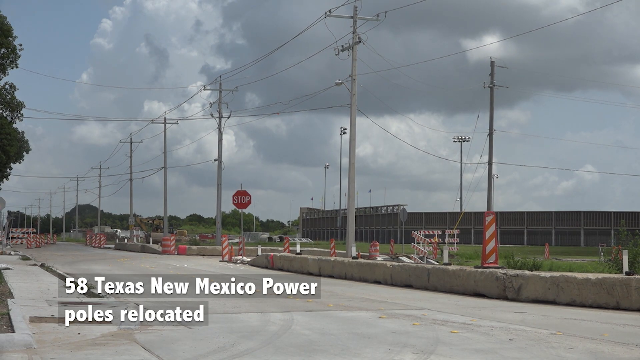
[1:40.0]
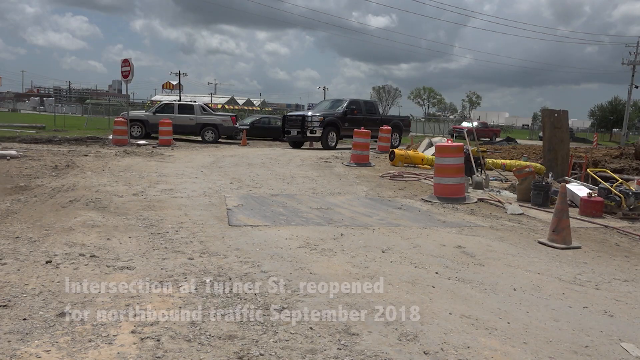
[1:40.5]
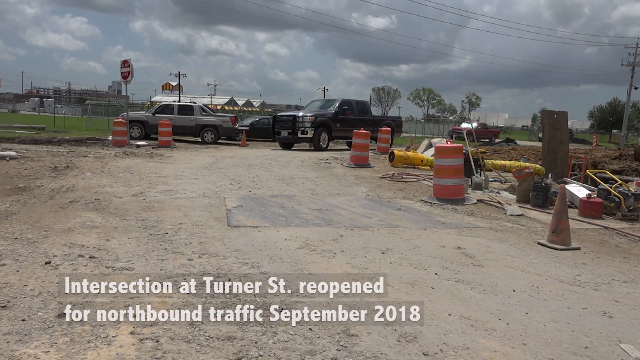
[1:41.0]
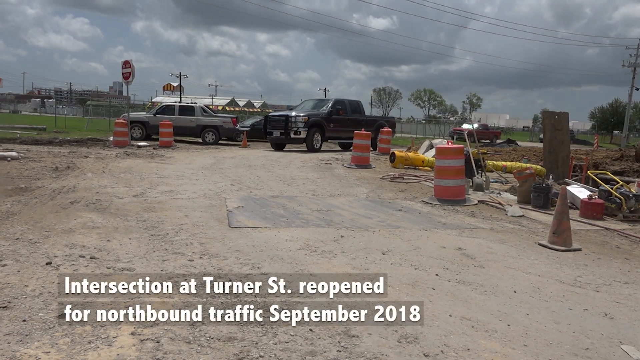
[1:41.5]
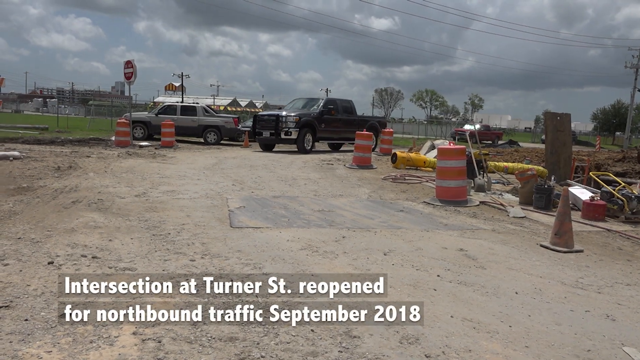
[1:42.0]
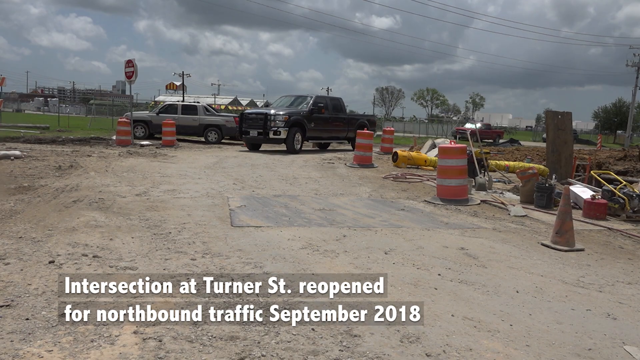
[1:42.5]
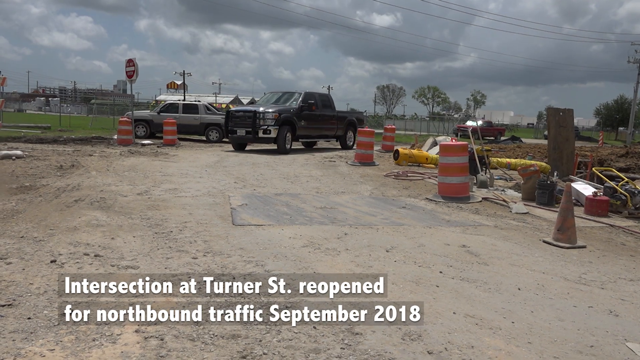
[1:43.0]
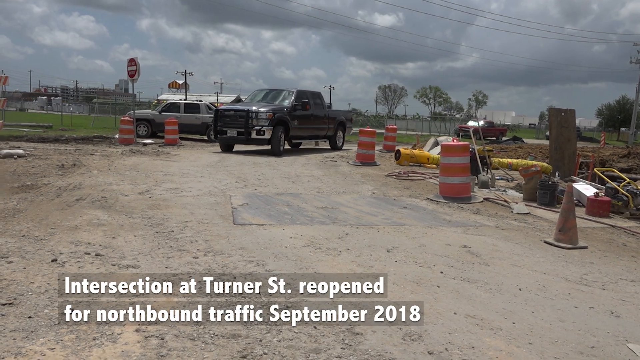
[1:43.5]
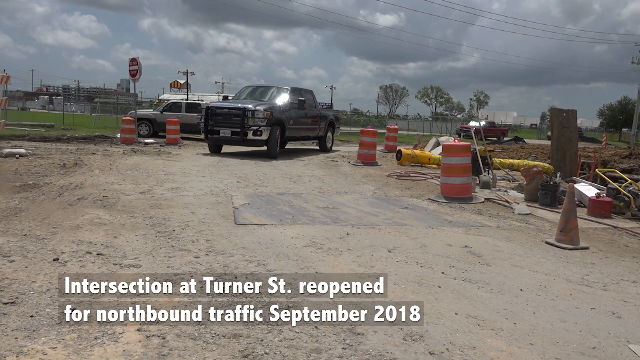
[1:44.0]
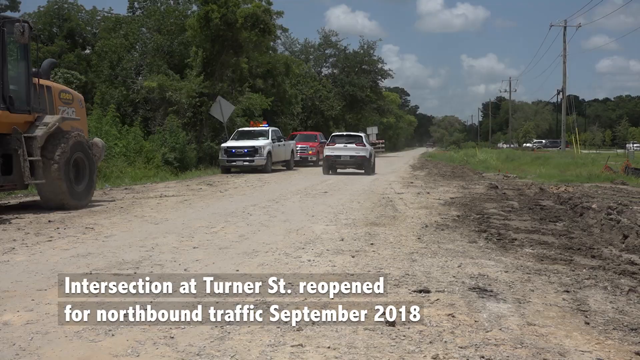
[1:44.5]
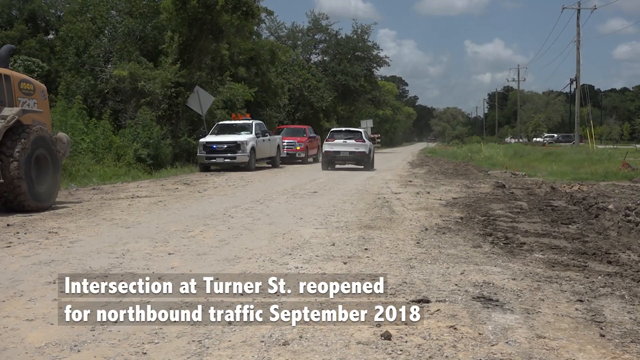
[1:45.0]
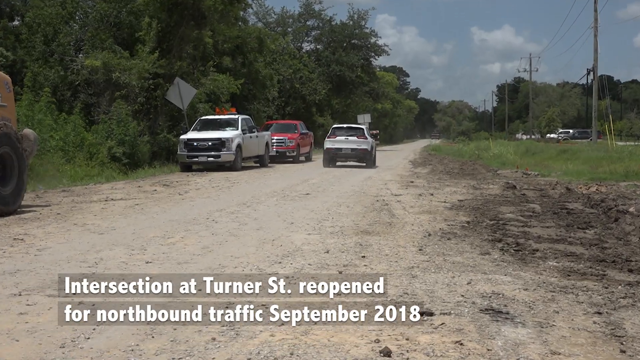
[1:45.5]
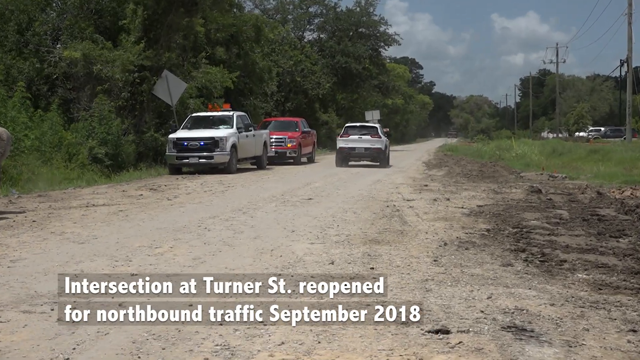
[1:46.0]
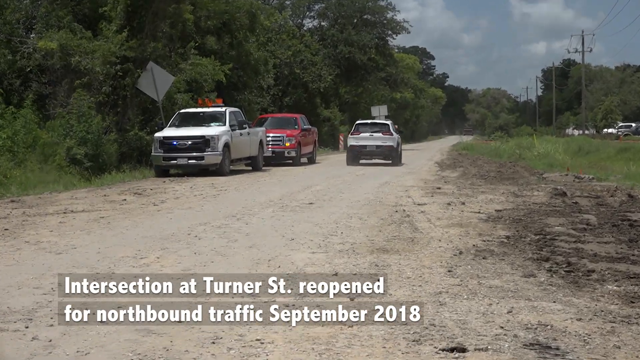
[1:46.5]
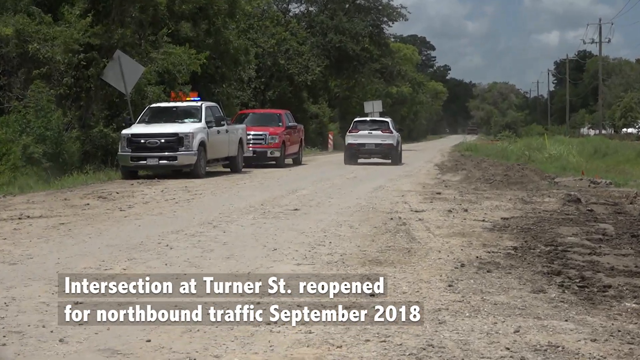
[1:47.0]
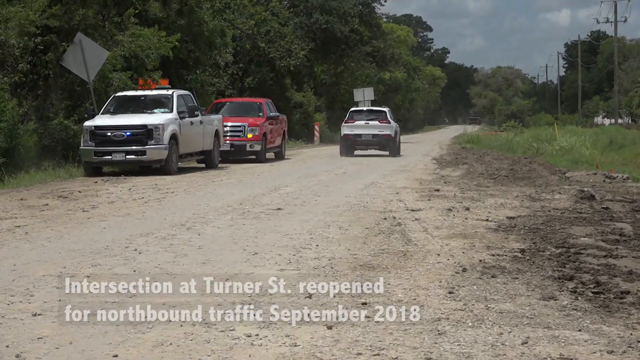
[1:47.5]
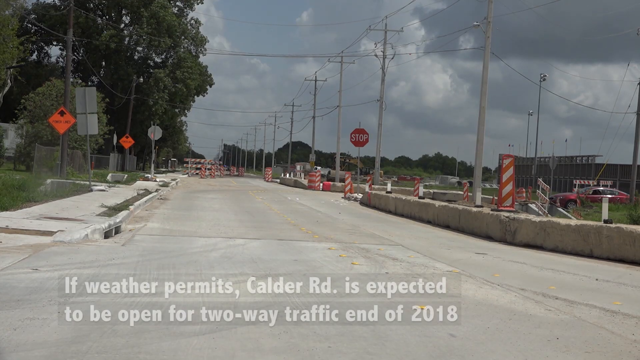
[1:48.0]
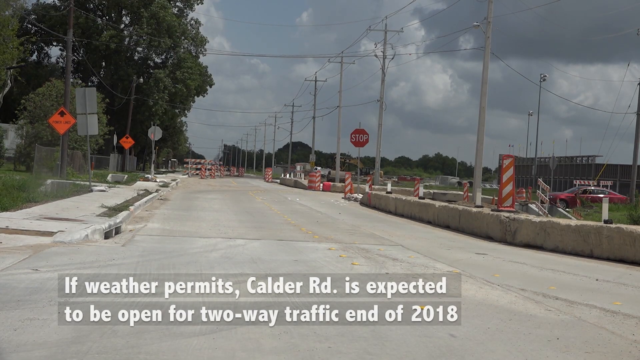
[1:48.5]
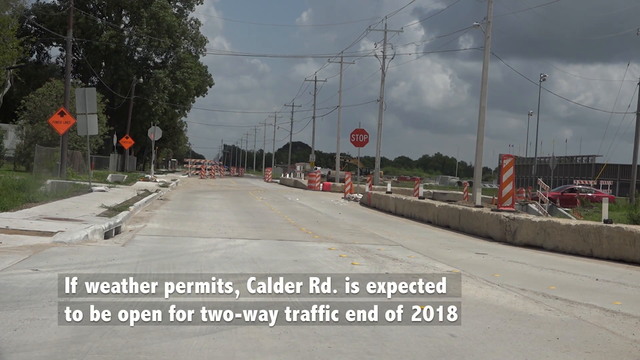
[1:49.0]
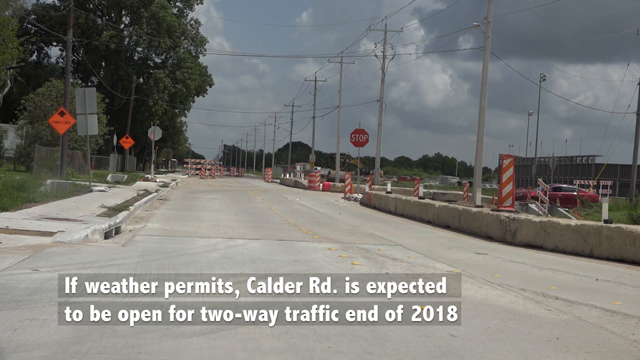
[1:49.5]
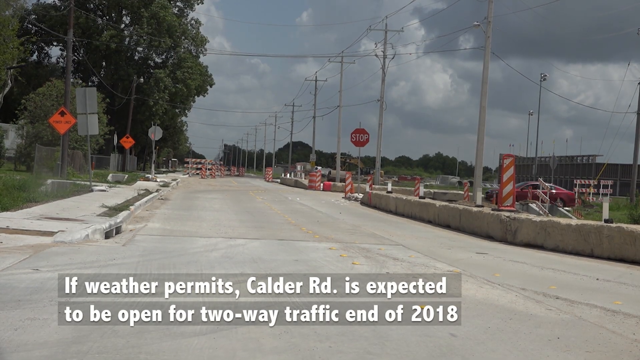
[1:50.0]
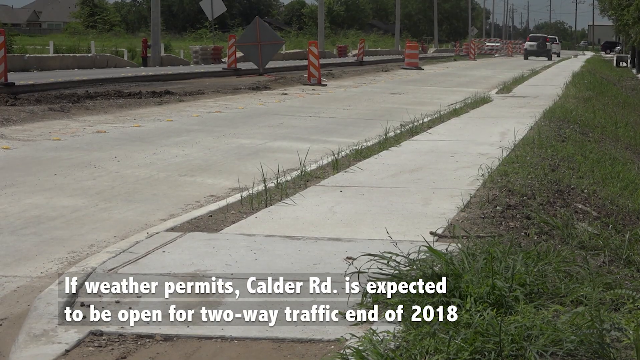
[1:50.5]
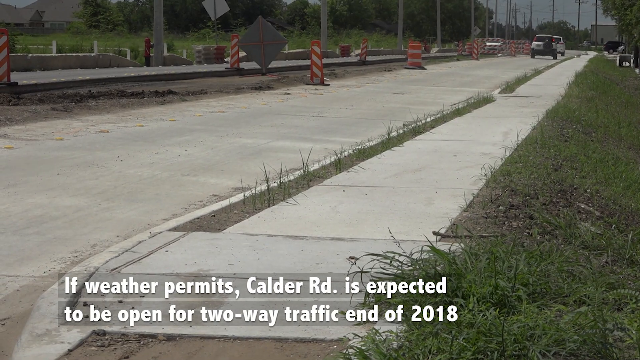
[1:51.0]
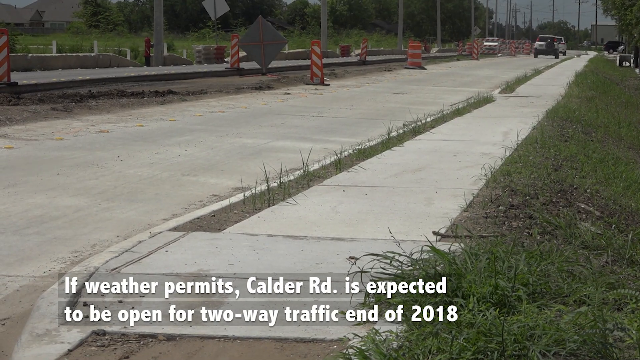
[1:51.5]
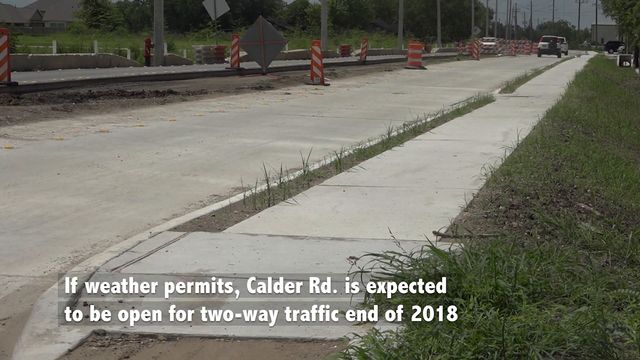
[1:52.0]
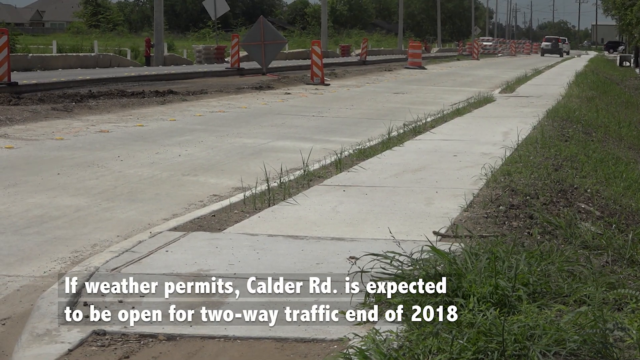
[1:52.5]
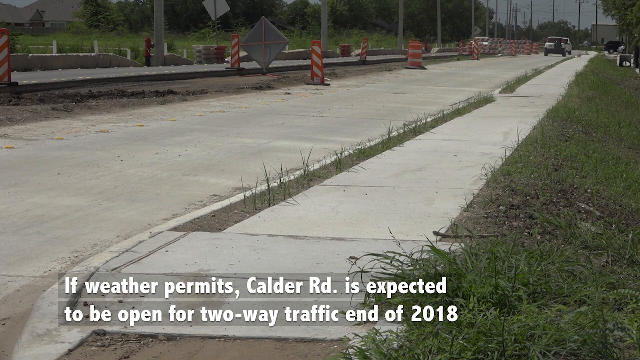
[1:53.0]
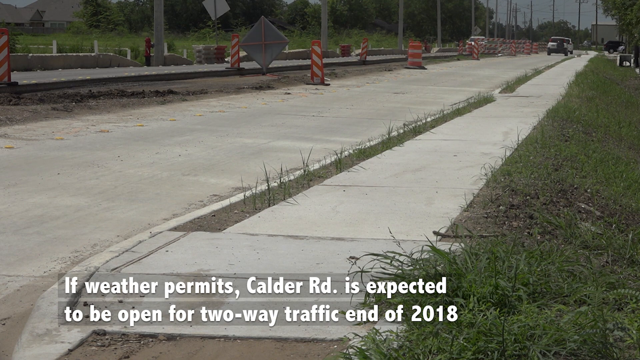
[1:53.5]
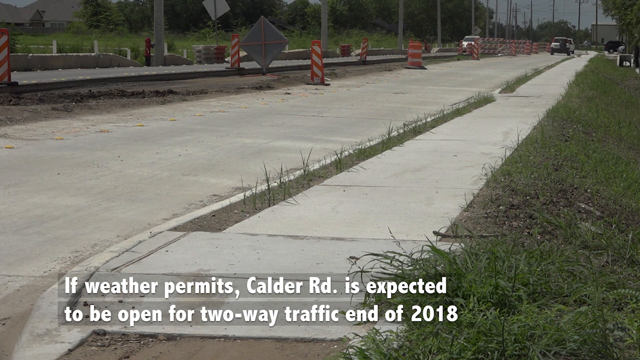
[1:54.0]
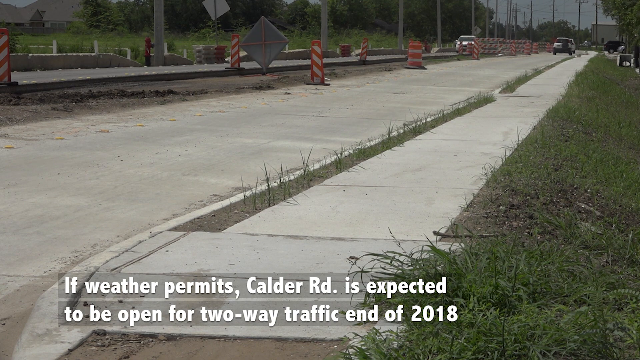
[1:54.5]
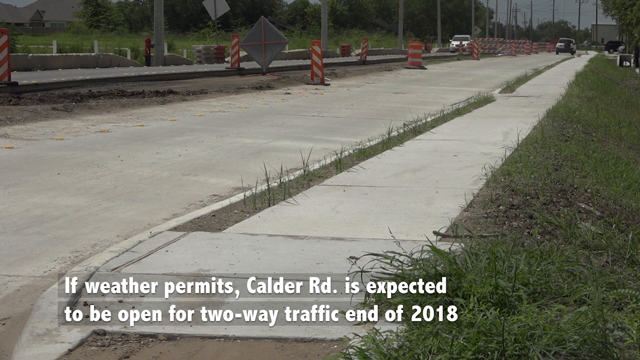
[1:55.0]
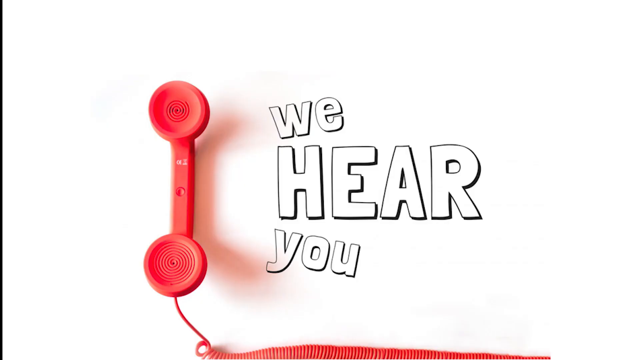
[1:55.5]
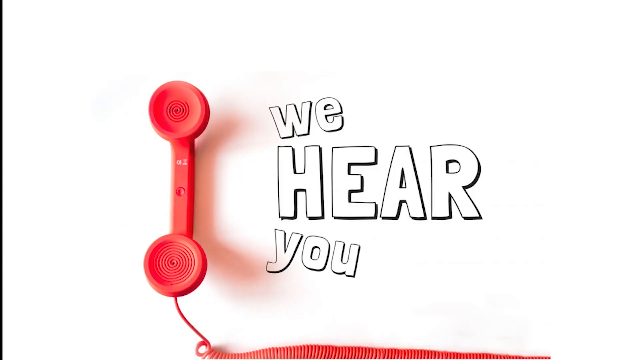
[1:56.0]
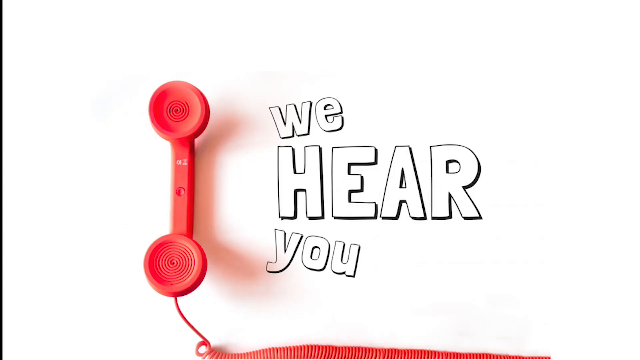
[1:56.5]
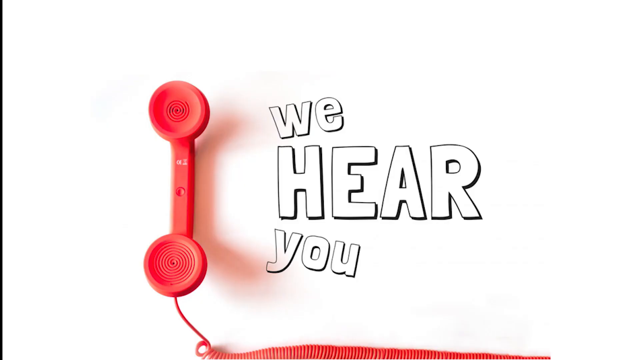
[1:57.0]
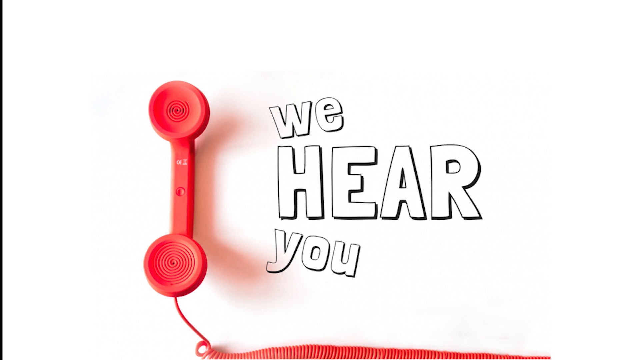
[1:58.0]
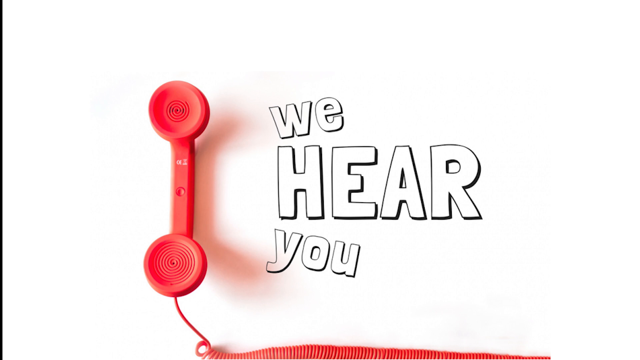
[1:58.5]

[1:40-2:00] A dirt gravel road has a couple of cars parked and a big black truck driving along it toward the camera, with a caption saying "intersection at Turner Street reopened". A different shot shows a gravel dirt road with a couple of cars parked along the side and a white SUV driving away. The newly paved road appears with various orange signs and stop signs, and the caption says "if weather permits Calder Road is expected to be open for two-way traffic end of 2018". From a ground view, two cars drive away down the street while another white car on the opposite side drives toward the camera. The video cuts to an image of a red telephone handle with the caption "we hear you", in a sort of comic-like font fanned out in an arc, with a shadow behind the red phone.